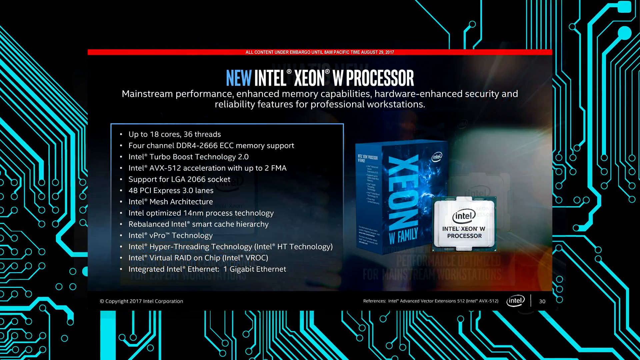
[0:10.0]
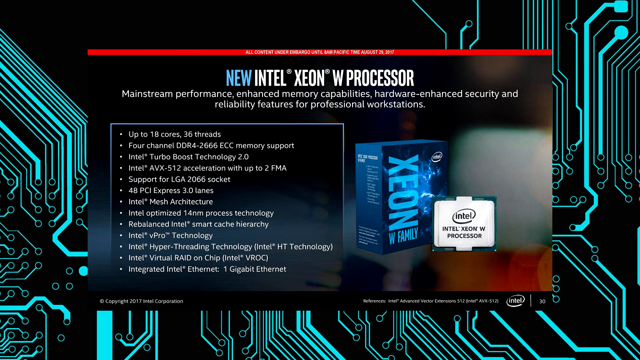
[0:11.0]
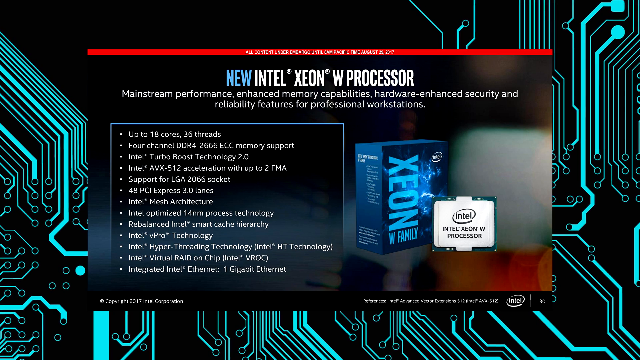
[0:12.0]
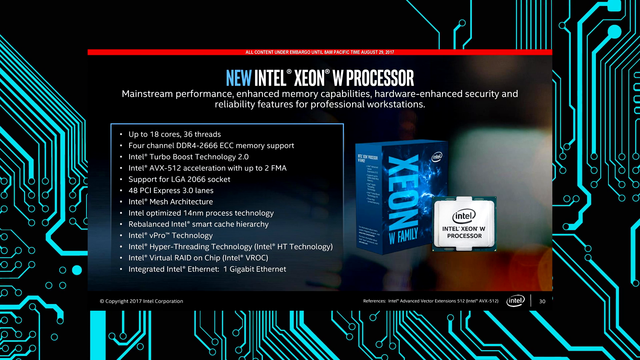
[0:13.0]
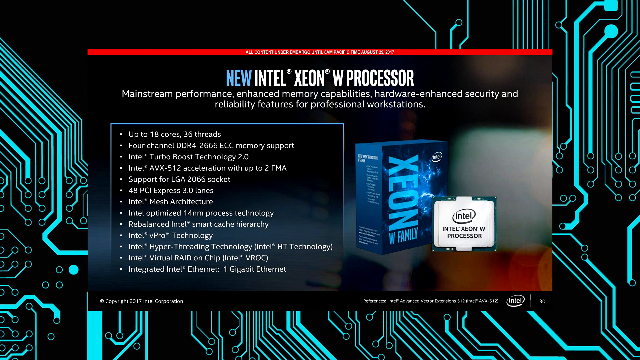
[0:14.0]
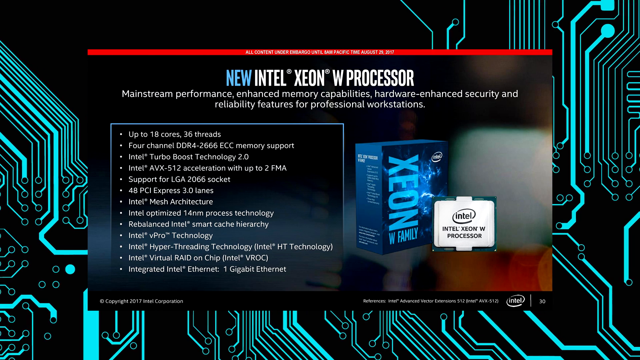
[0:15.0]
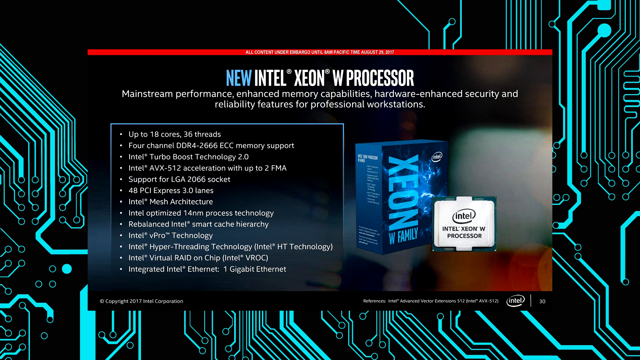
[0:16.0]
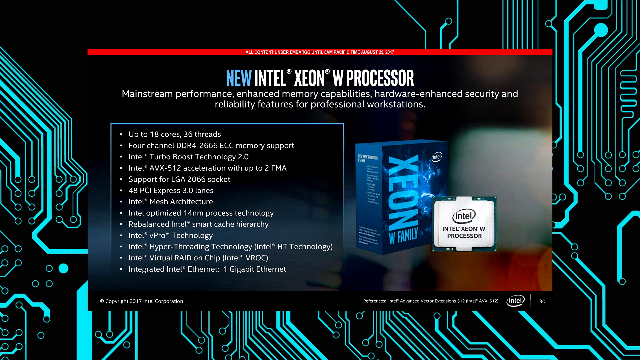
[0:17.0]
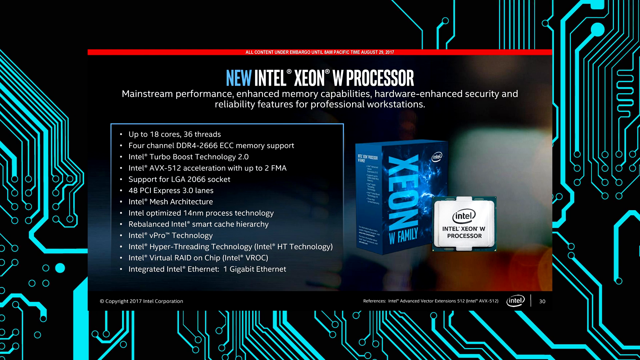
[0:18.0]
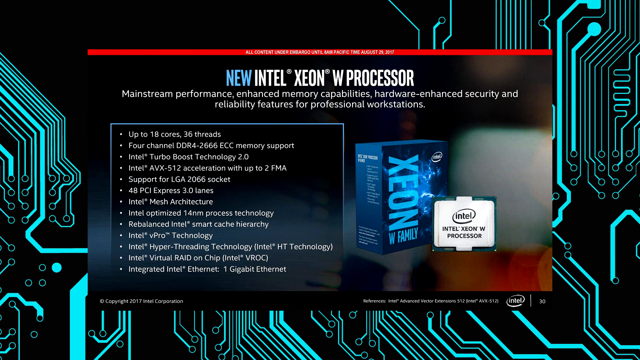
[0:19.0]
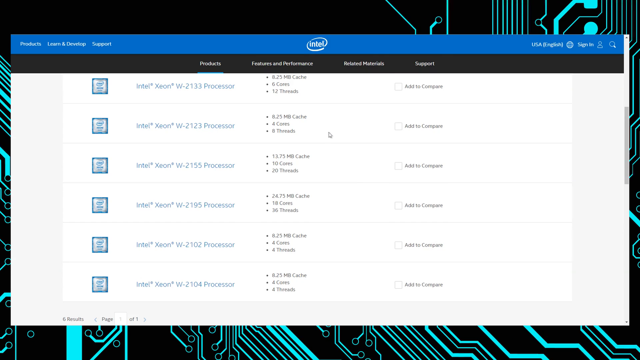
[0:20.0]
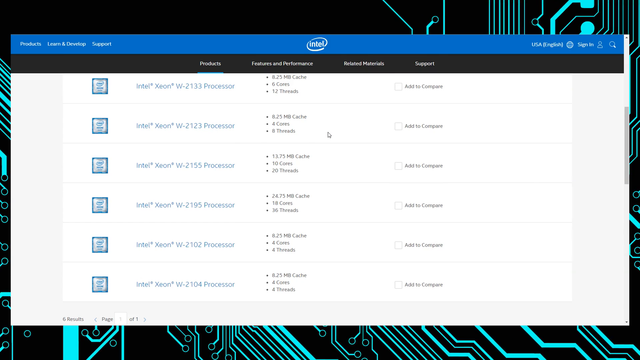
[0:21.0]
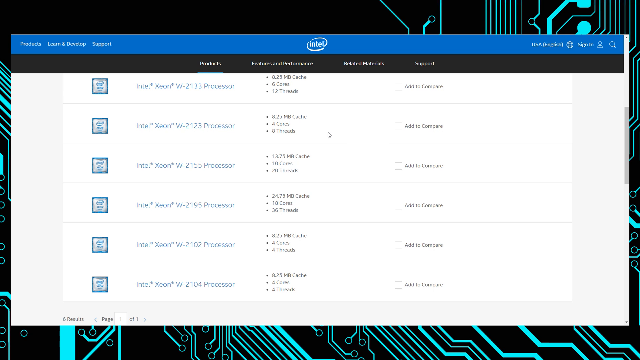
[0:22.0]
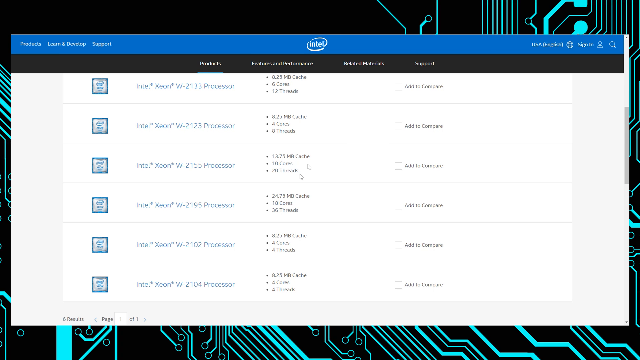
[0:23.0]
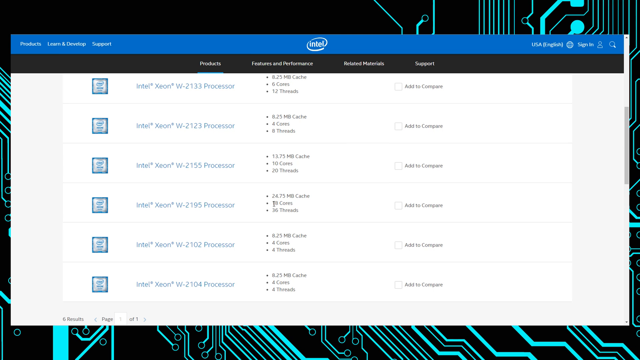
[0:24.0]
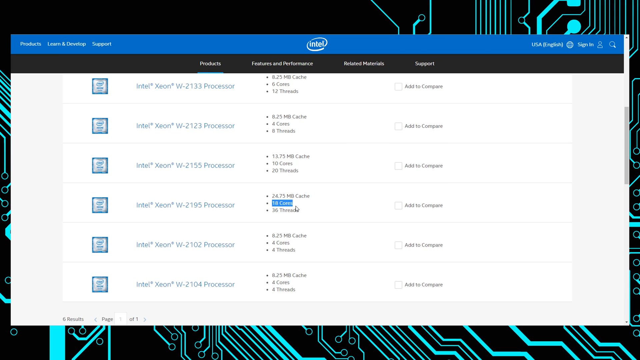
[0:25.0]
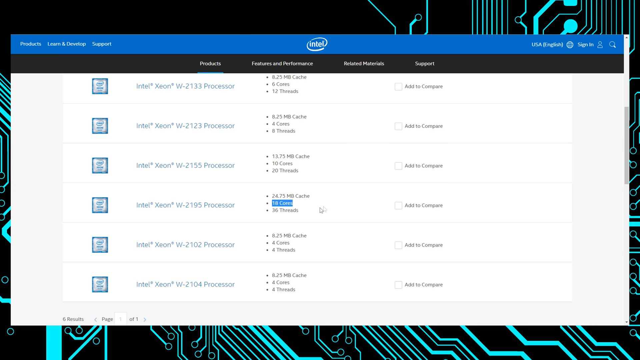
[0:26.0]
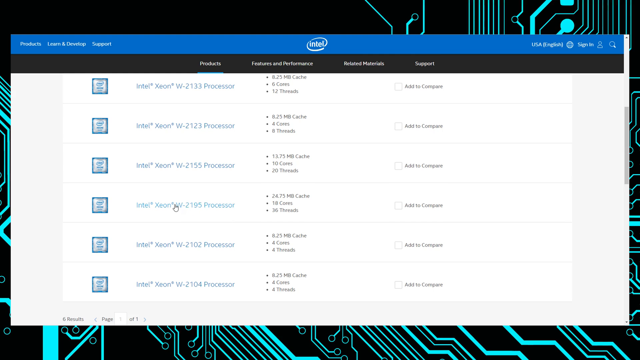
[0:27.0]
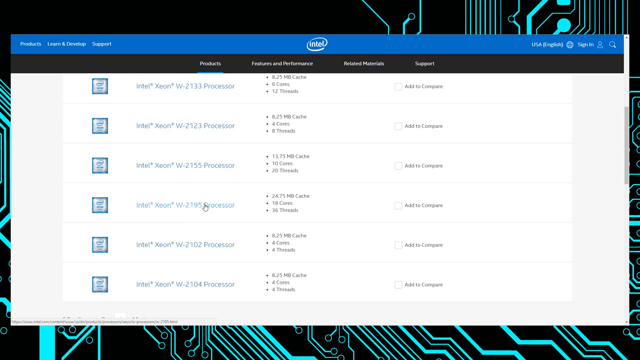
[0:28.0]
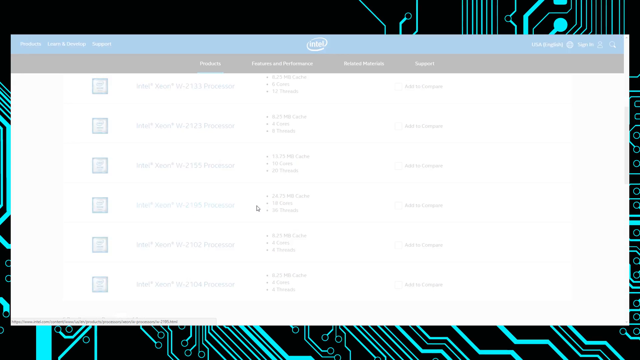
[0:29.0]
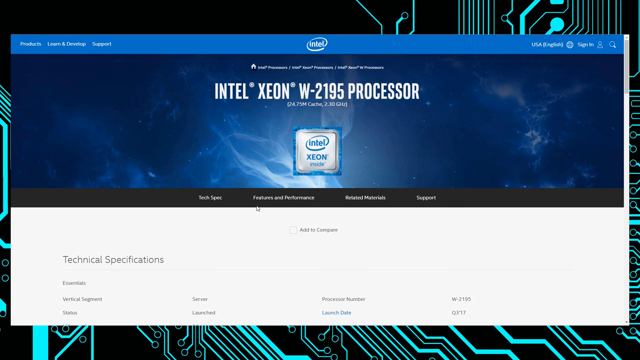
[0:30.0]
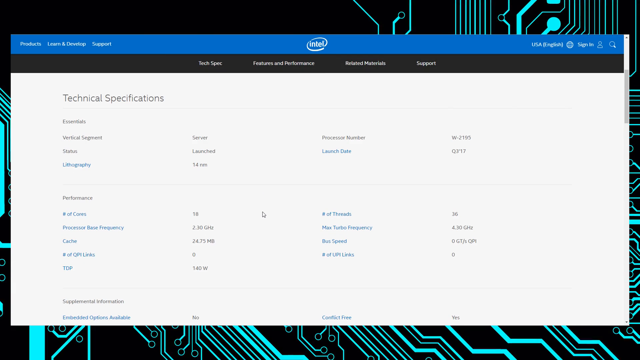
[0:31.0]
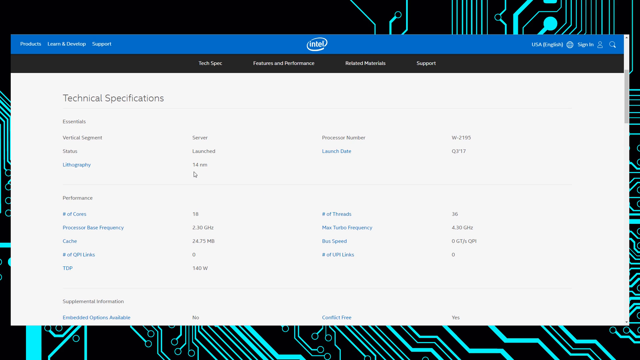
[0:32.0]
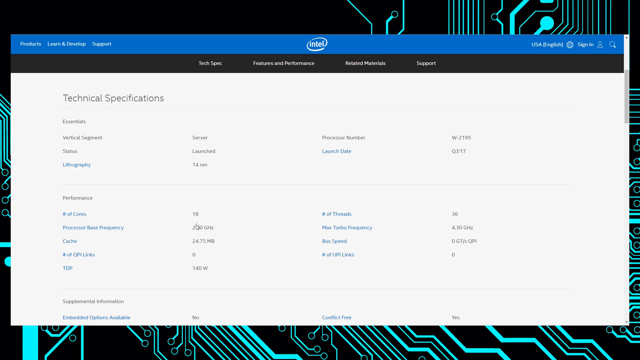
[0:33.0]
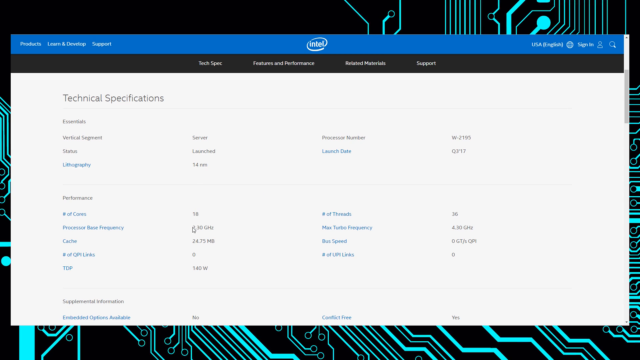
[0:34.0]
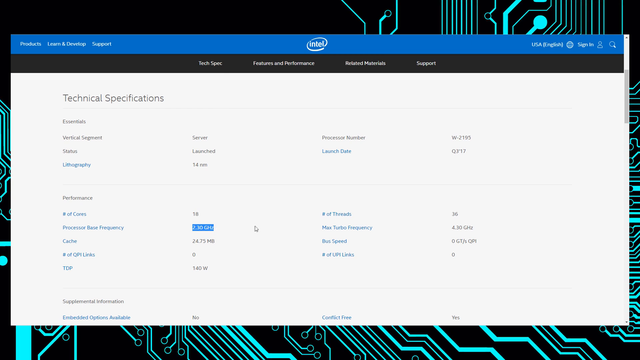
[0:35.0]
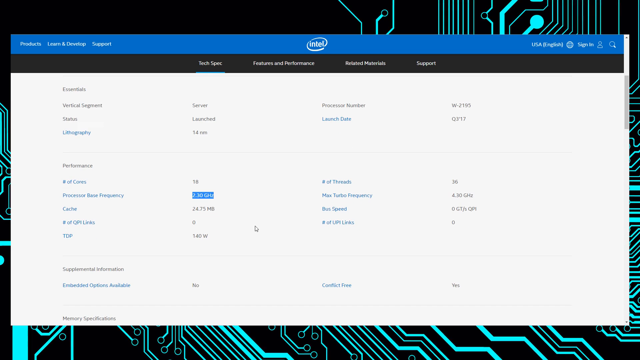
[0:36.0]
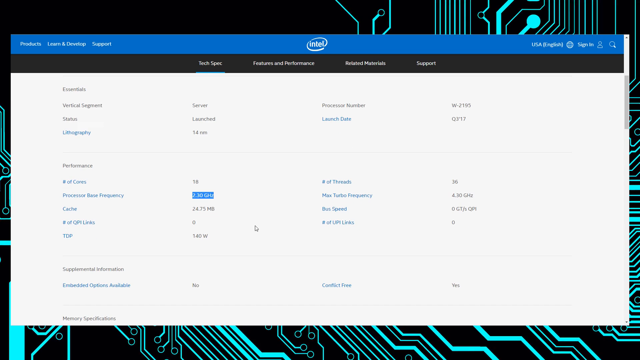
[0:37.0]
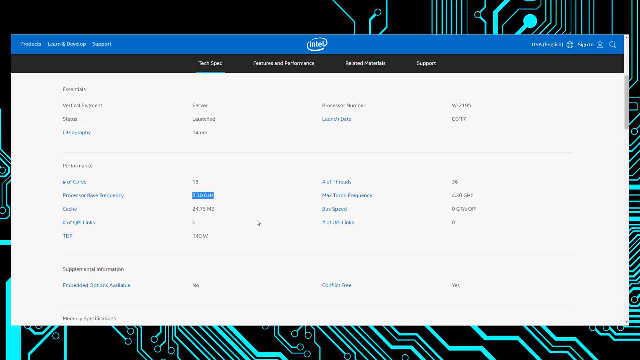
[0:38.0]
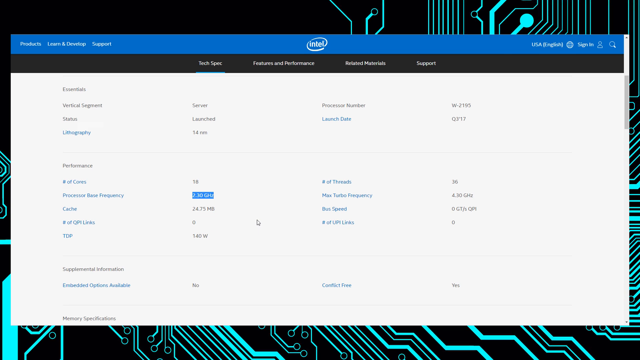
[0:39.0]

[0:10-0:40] A text overlay reading "new Intel Xenon" appears, mentioning mainstream performance, enhanced memory capabilities, hardware-enhanced security, and reliability features for professional workstations. A list of bullet points and key facets of the processor follows, taking up a good majority of the screen. The video then moves to a web page showing various listings for the processor, apparently different configurations with different numbers of cores and other attributes. The person clicks on one of them and looks at the technical specifications of that selection. Attributes shown include up to 18 cores, 36 threads, Intel Turbo Boost technology, and 48 PCI Express 3.0 lanes. The website shows the technical specifications in a list format, and he highlights something to do with frequency in gigahertz.